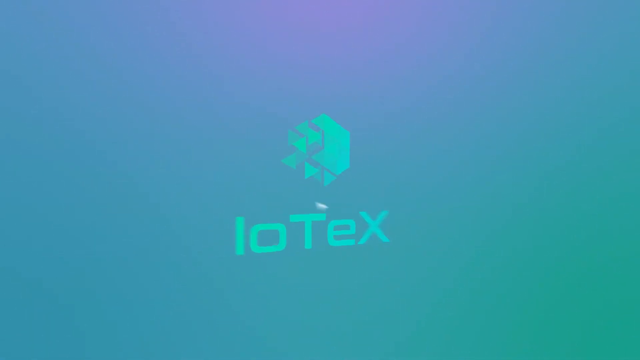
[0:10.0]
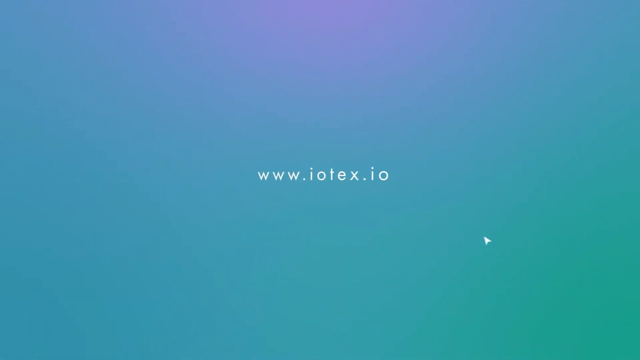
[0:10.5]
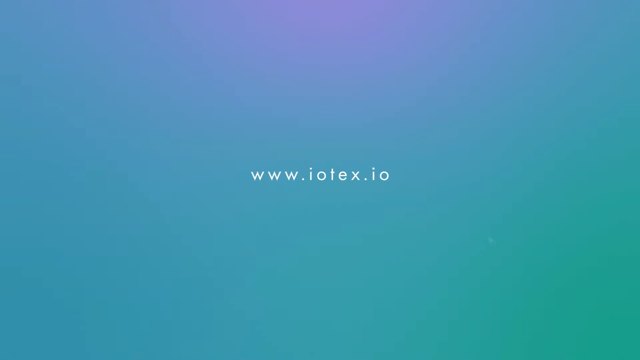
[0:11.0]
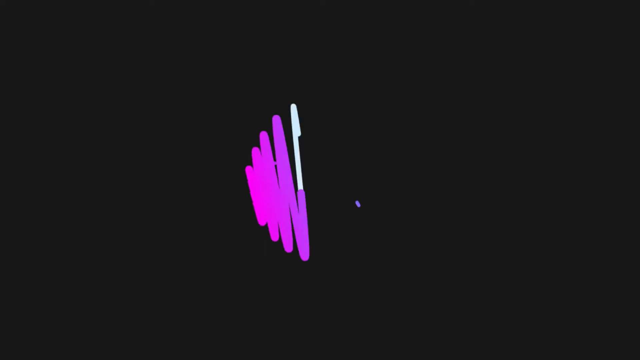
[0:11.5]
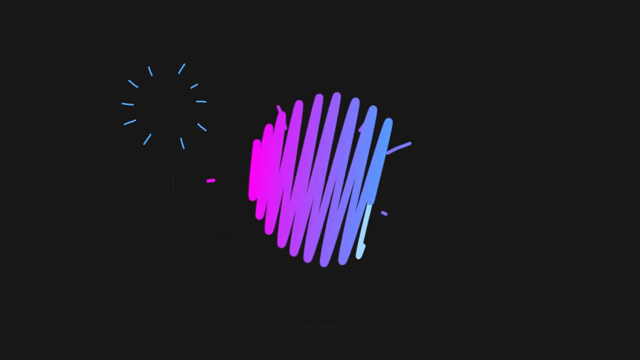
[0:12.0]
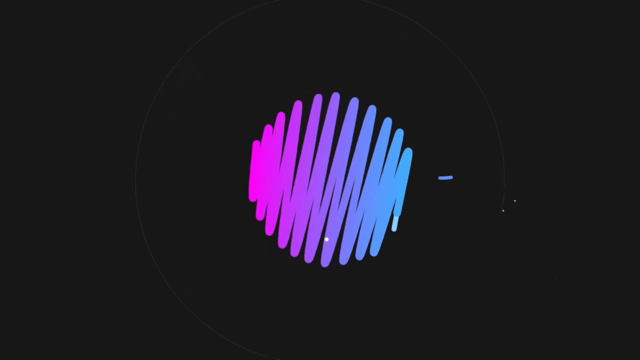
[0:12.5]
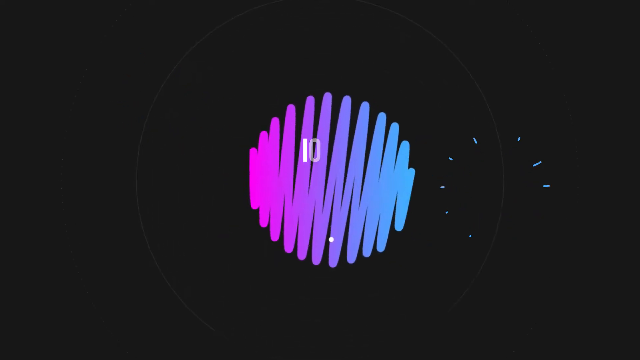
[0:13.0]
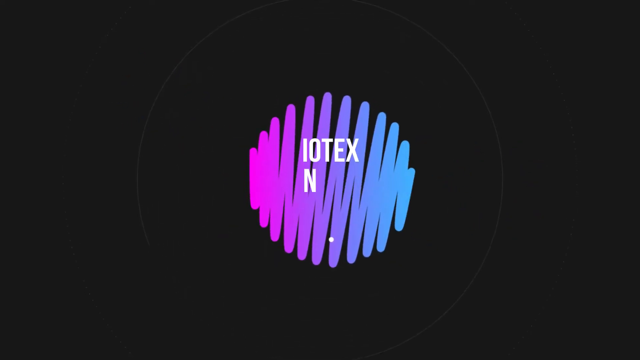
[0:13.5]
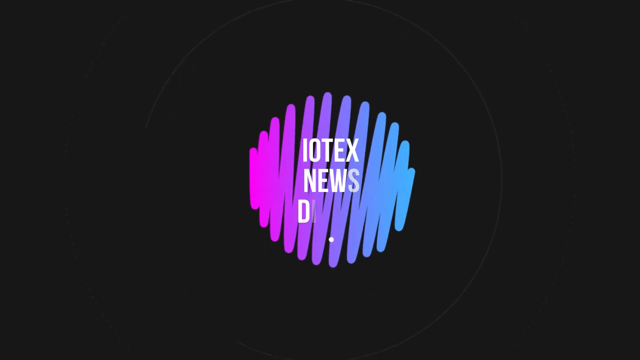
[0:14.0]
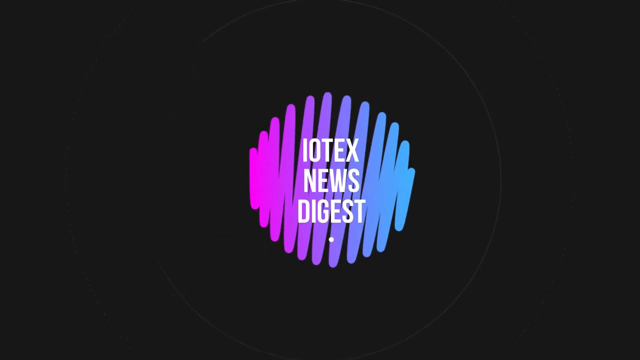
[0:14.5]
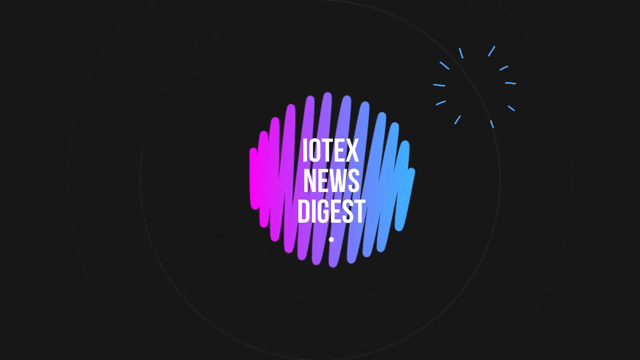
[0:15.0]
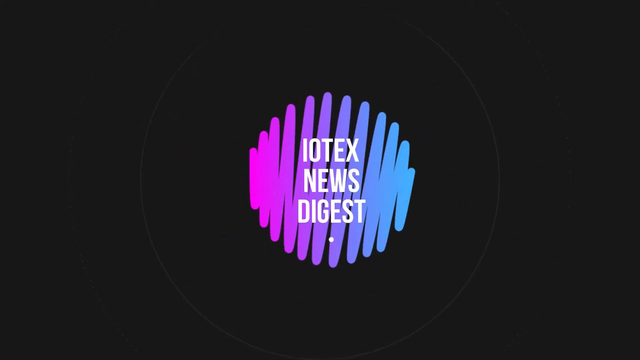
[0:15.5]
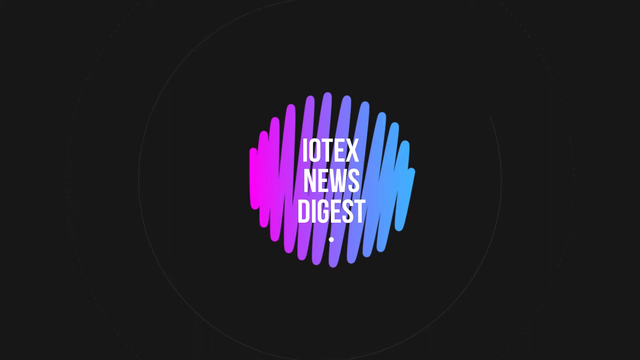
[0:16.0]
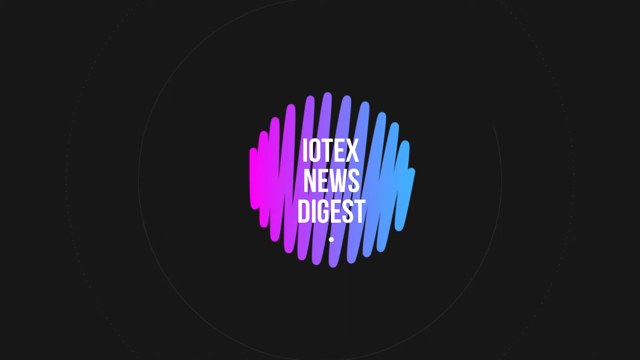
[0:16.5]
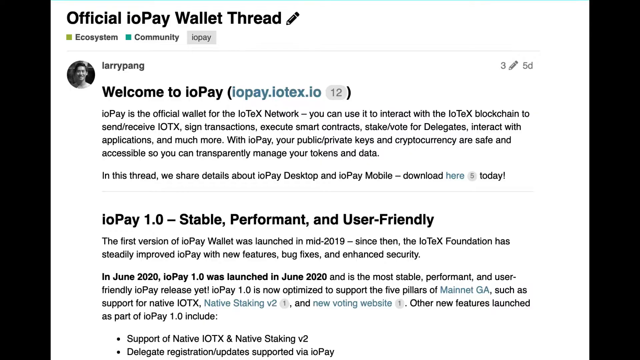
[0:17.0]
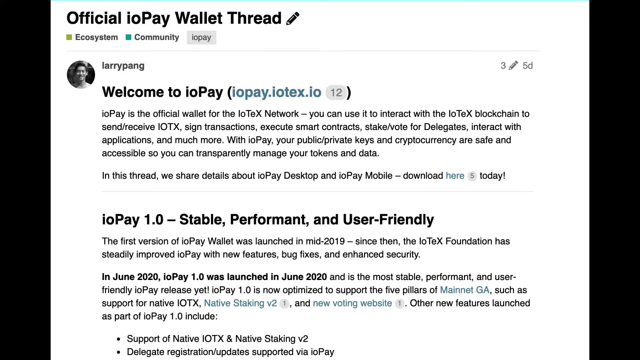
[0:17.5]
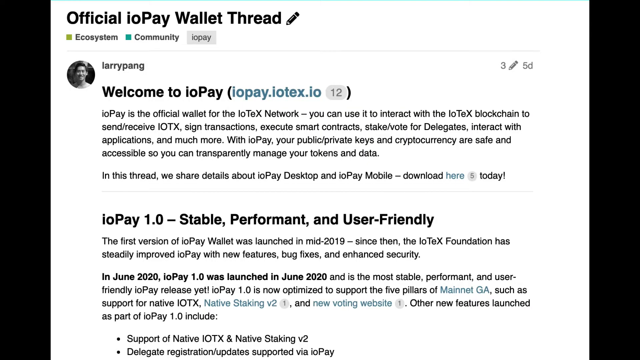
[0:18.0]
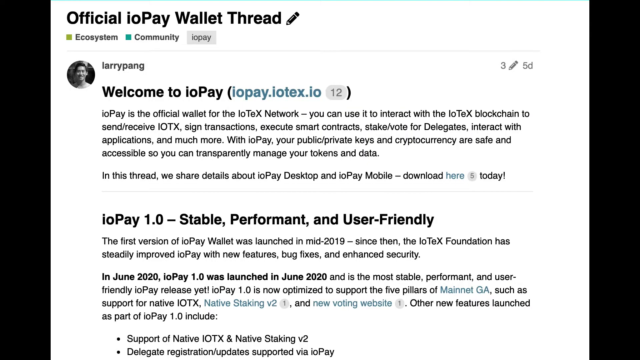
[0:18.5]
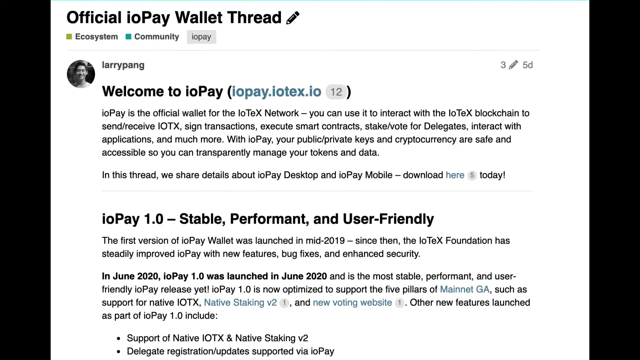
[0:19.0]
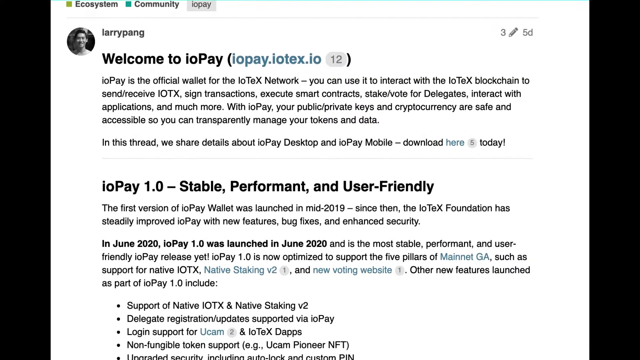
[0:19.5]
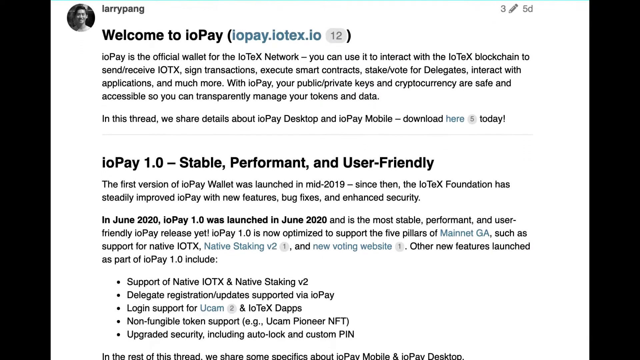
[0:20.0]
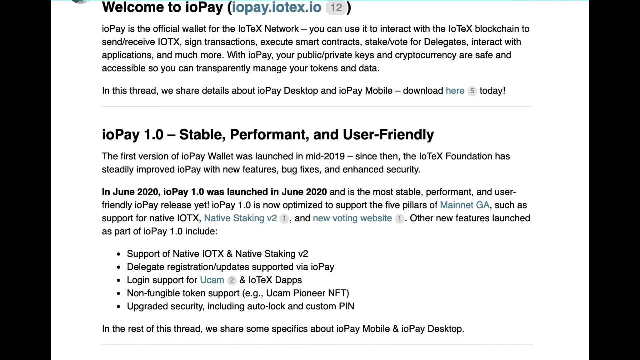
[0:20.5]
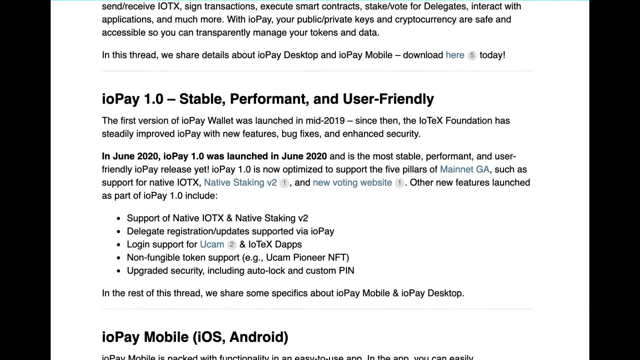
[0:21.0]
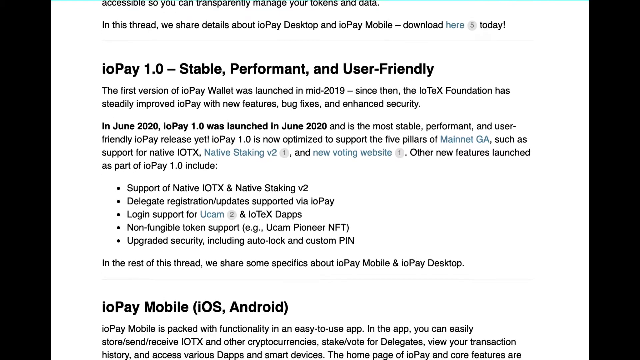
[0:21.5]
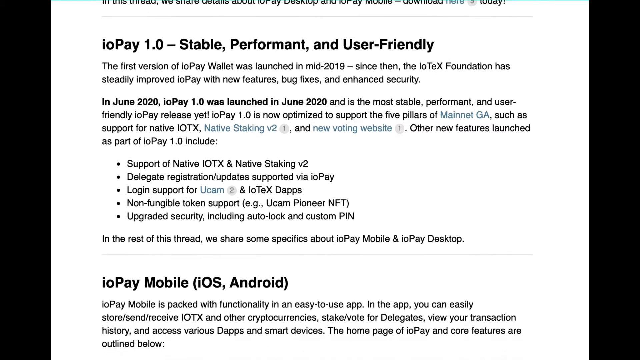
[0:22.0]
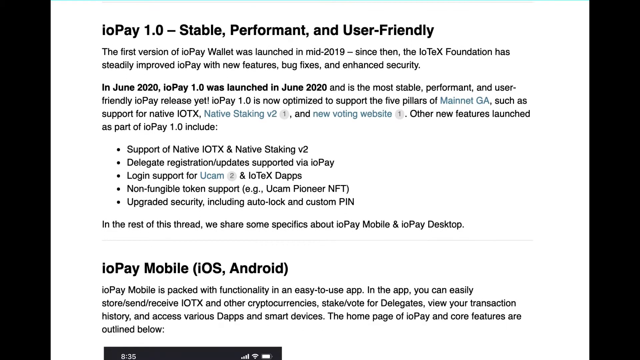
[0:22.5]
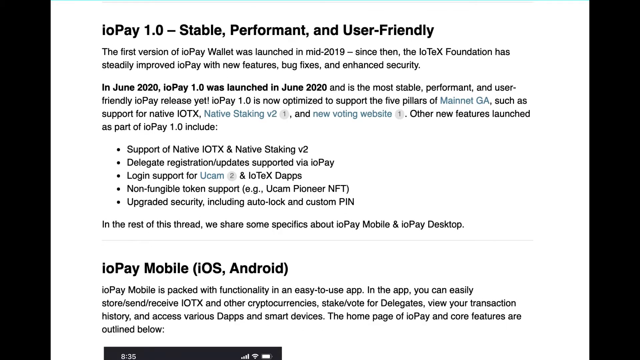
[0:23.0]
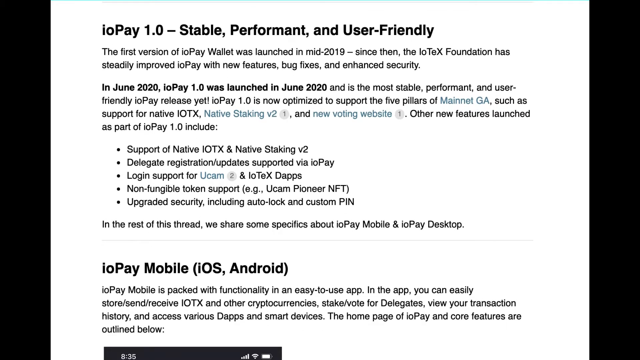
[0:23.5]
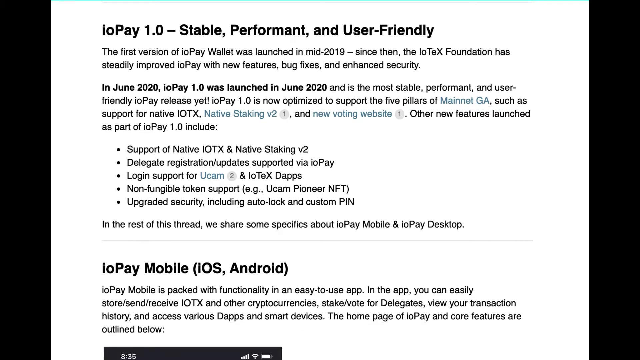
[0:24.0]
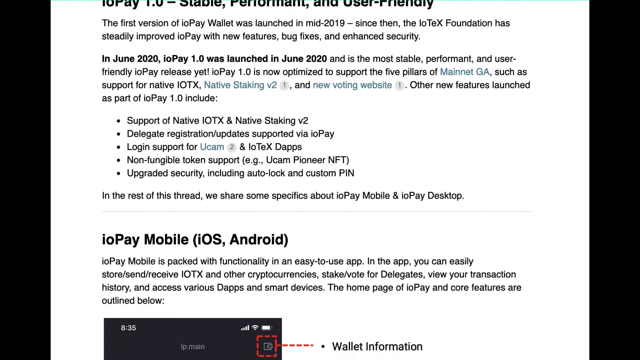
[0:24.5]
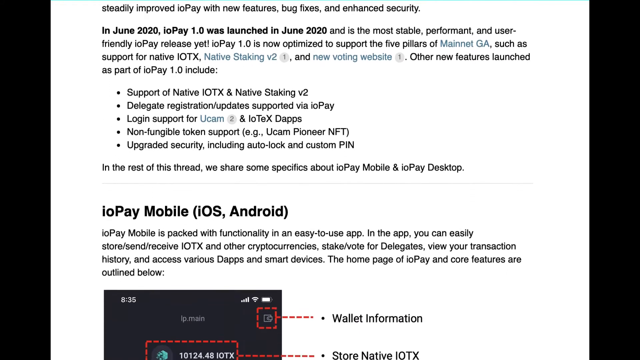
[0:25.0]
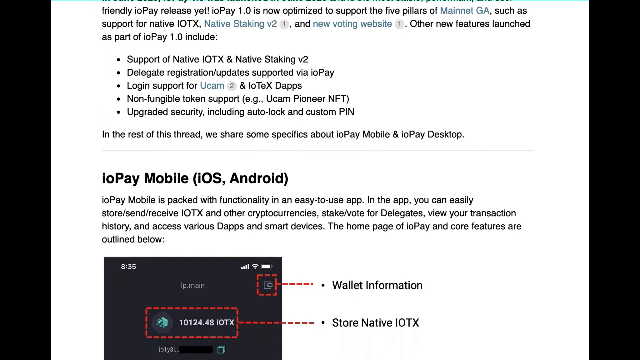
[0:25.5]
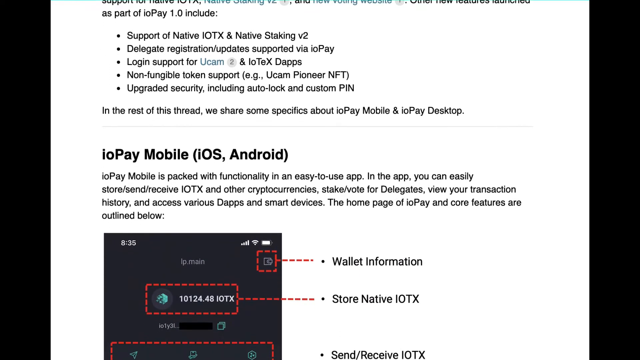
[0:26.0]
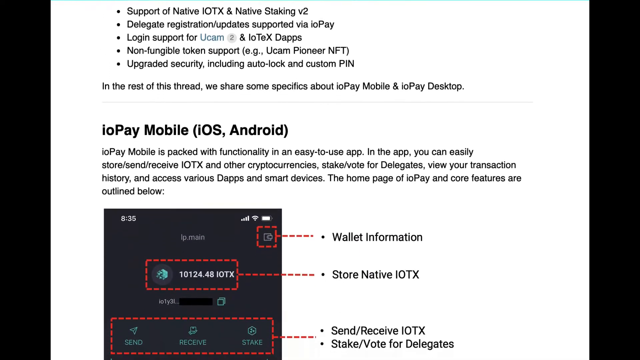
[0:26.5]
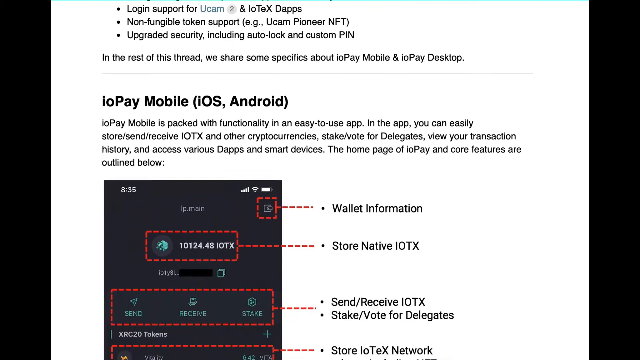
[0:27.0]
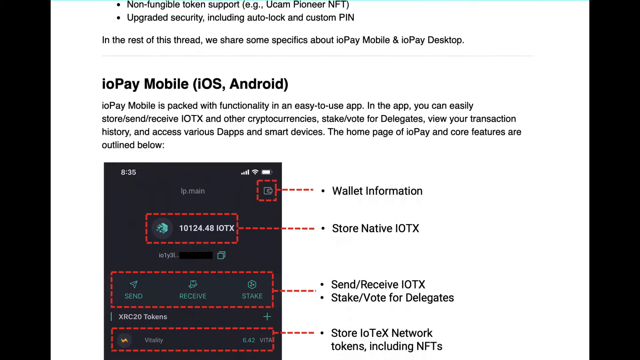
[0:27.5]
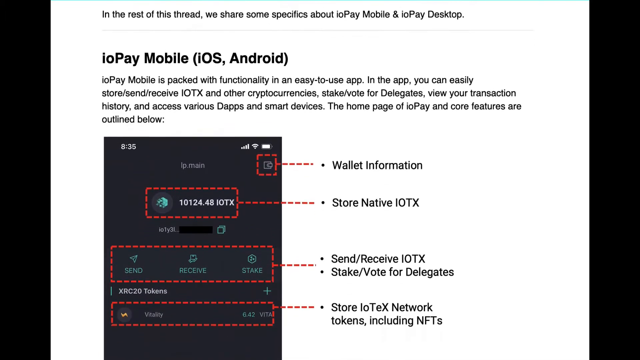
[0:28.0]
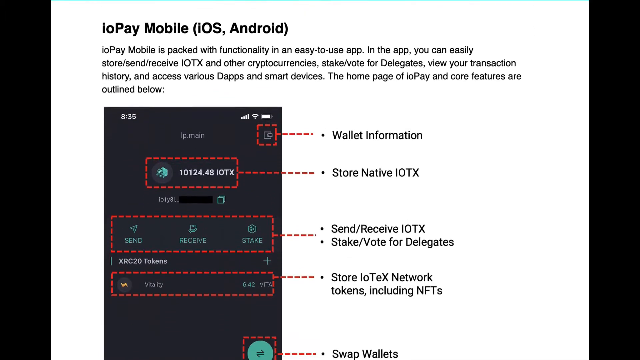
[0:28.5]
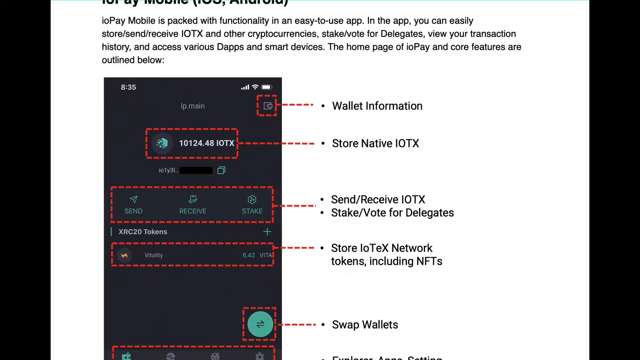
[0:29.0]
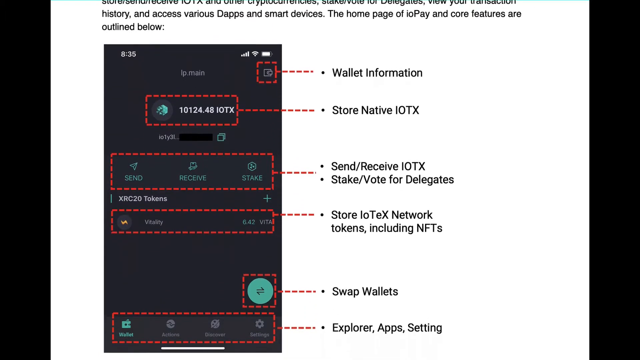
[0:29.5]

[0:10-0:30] The logo quickly does a kind of flipping transition into a website domain, "www.iotex.io". This leads to a black background with another purple and bluish drawing that looks like a squiggle, somewhat like a dolphin. In the middle of it, bold white text says "iotex.io". Something like a firework goes off in the top right of the screen. Next comes what looks like a screenshot of a forum post that says "the official IoT wallet thread". The screen scrolls slowly down through the post, which mentions payments and paying using iOS and Android. It has headers, subheaders and bullet-point lists, as well as screenshots of the phone app with labels showing how the app works. The post has a white background and looks like a fairly regular forum post, possibly from GitHub or a subreddit.